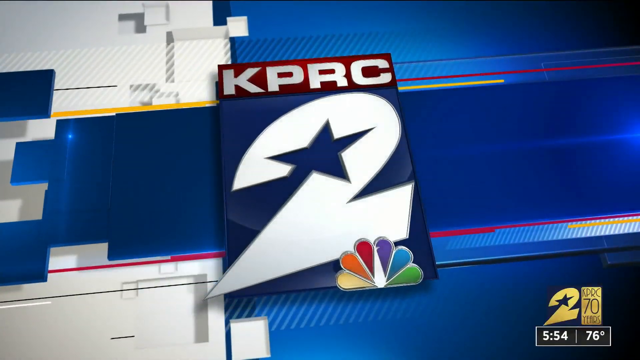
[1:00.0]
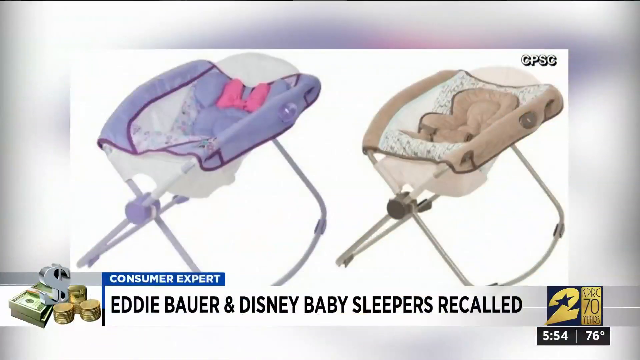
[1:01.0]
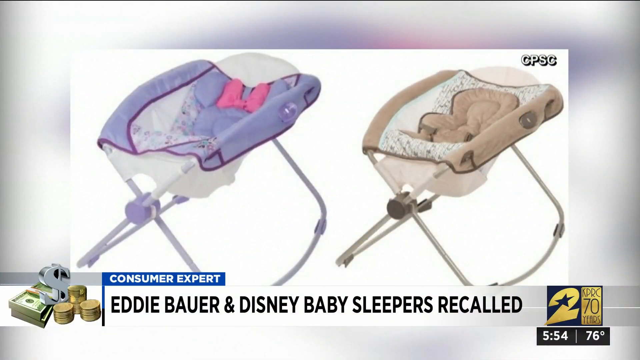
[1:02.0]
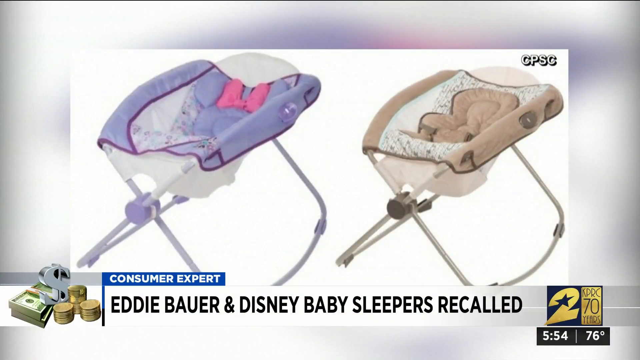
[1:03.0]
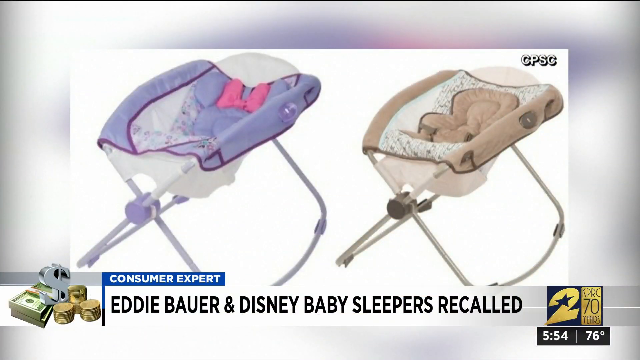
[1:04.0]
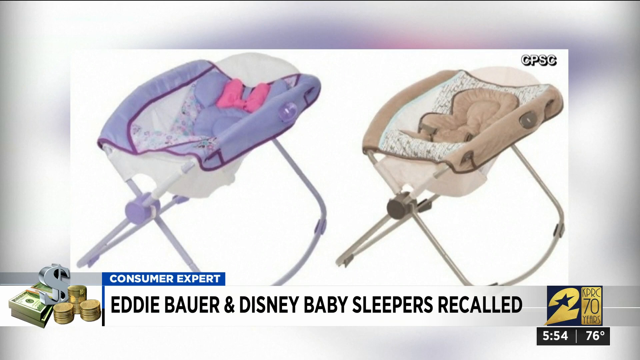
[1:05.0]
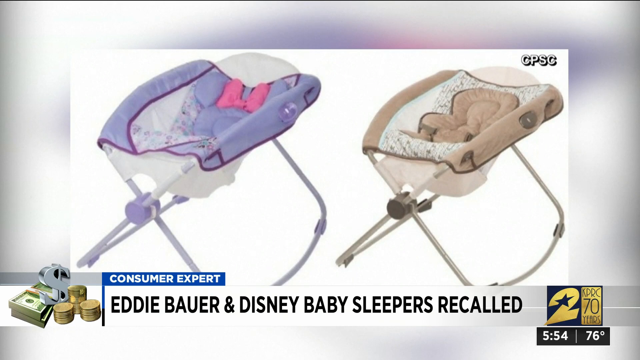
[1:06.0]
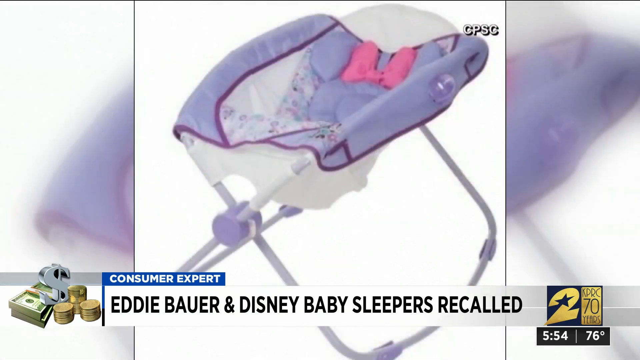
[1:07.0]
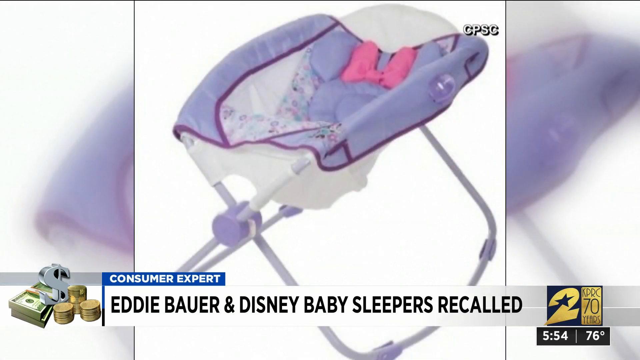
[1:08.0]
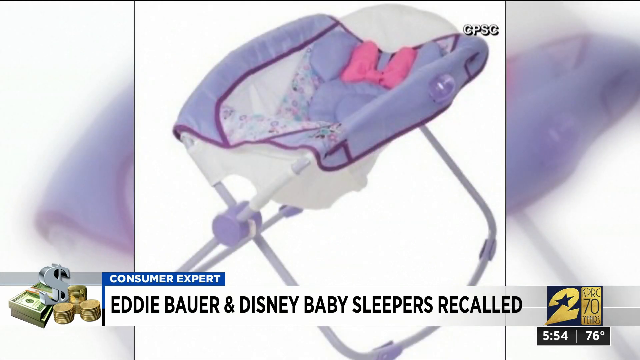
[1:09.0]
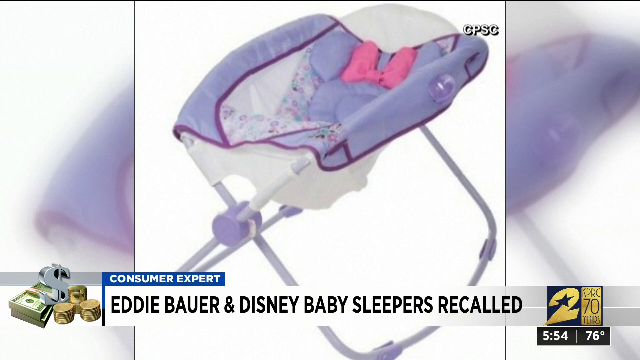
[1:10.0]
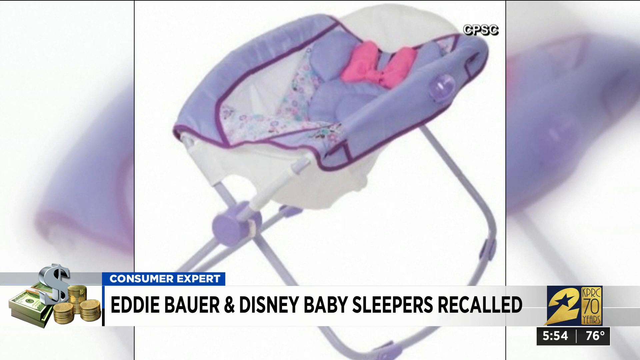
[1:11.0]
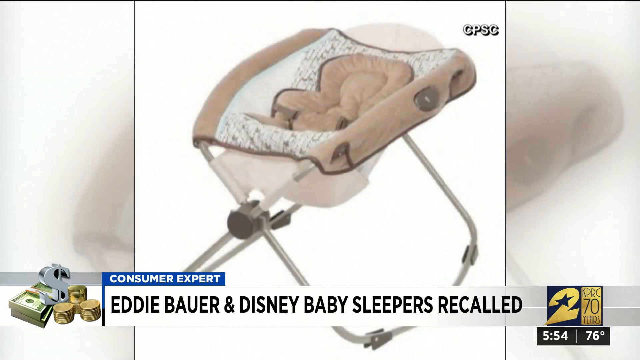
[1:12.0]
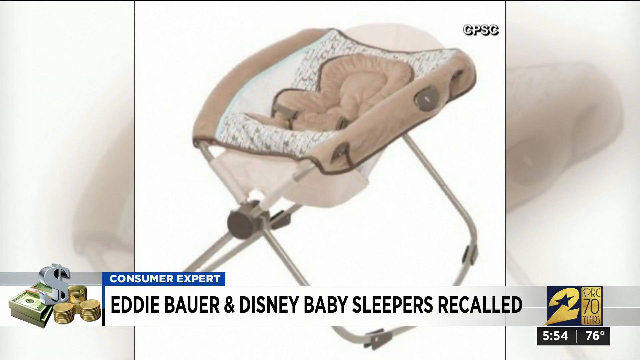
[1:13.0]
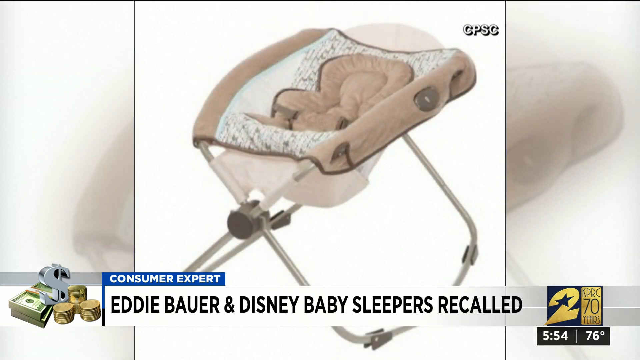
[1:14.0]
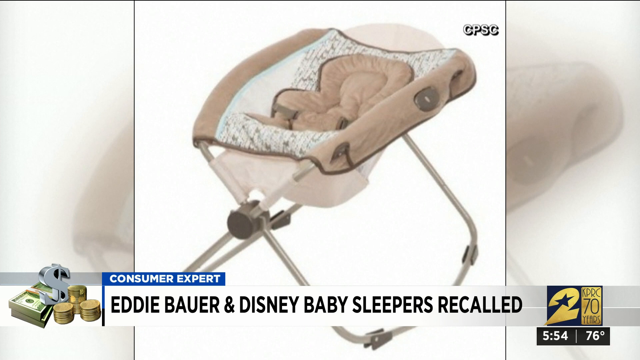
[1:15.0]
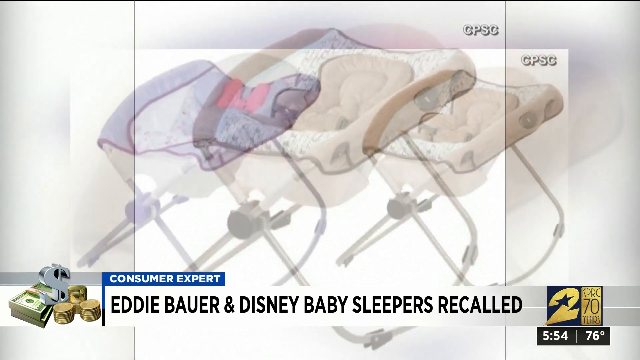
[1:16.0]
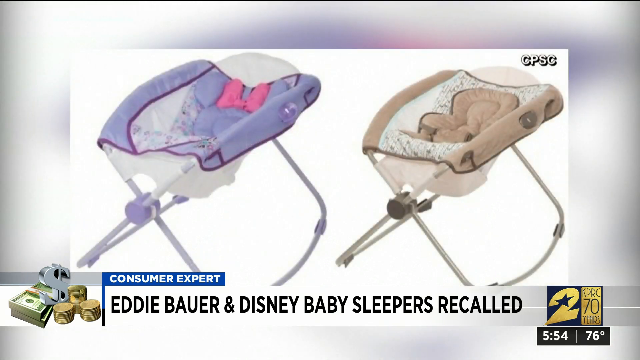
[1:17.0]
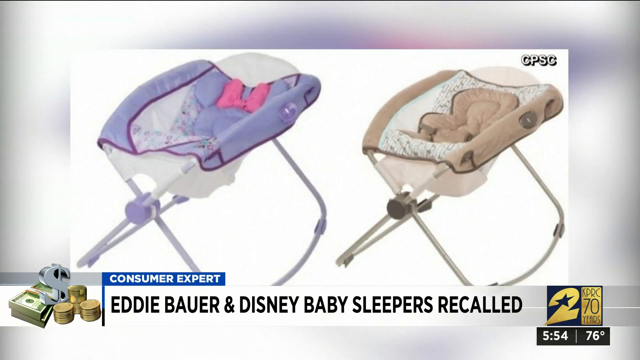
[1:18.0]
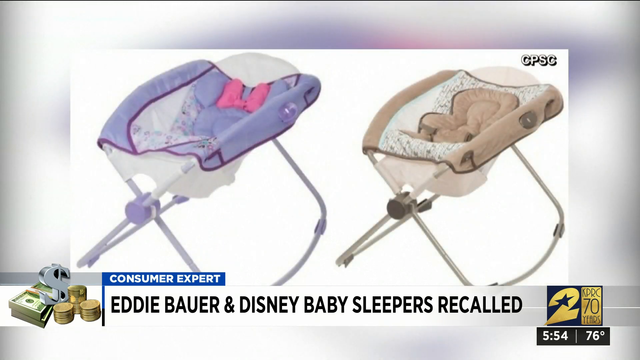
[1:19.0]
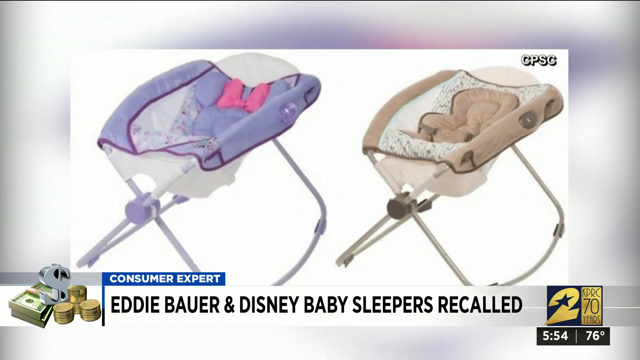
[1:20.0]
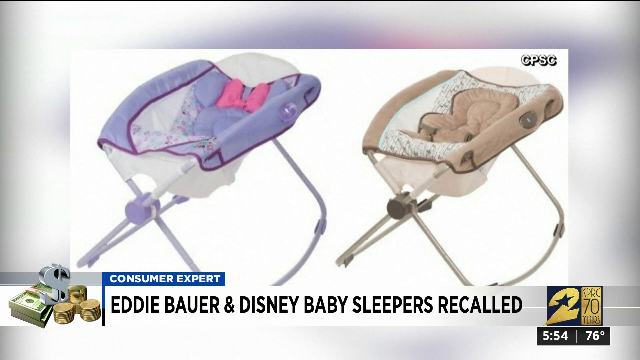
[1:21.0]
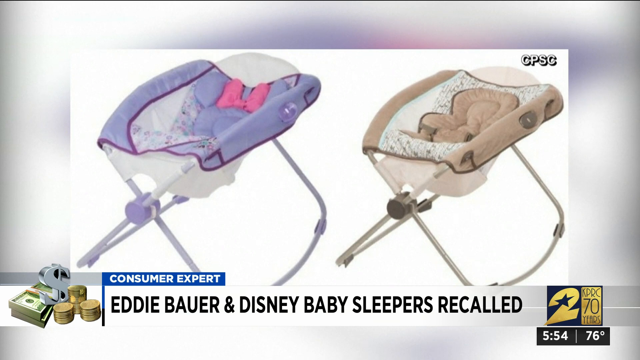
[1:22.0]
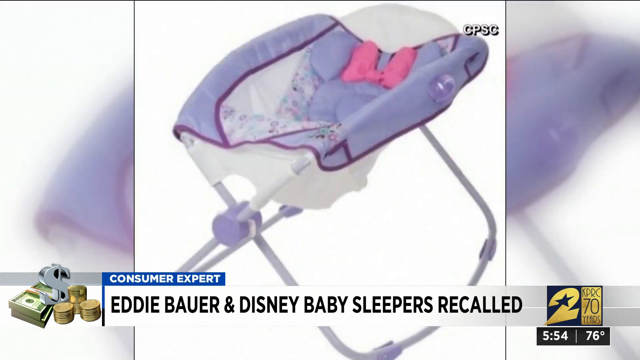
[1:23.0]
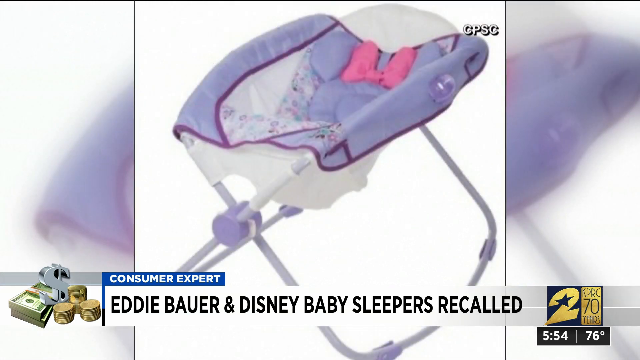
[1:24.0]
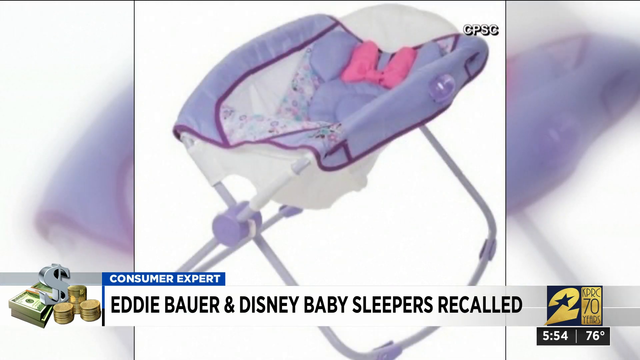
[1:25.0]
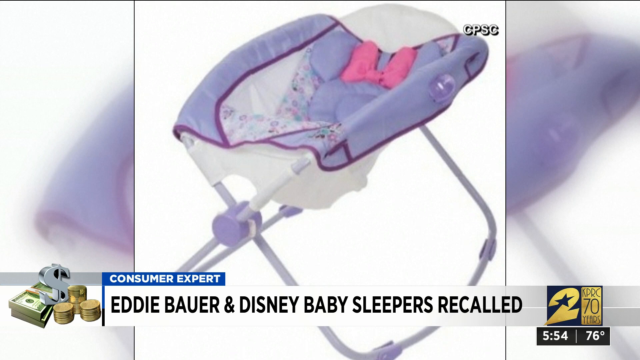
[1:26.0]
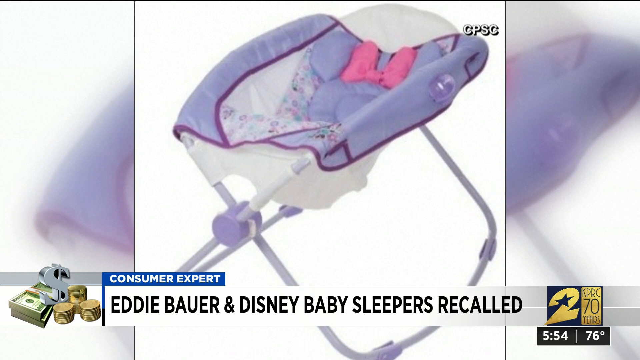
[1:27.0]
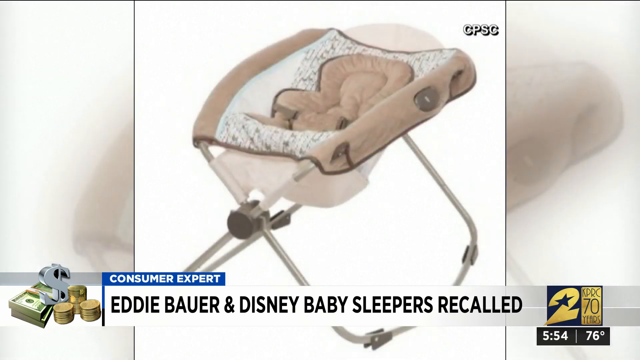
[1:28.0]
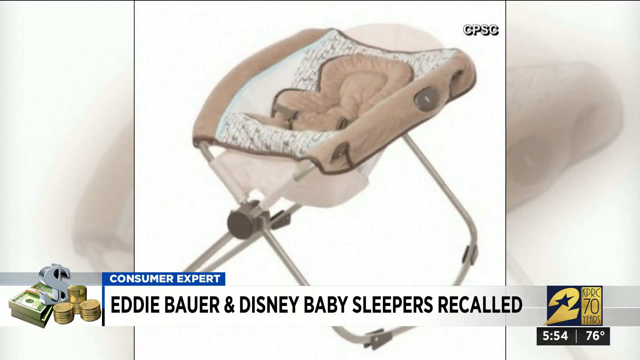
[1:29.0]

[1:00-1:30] A screen with a blue and gray split background shows, in the middle, a logo for the KPRC2 news station: a large number 2 with a star cut out in the middle, and the NBC peacock logo. The screen changes to an image of two baby sleepers on a white background, a purple one on the left and a brown one on the right. A white rectangular box at the bottom of the screen reads "Eddie Bauer and Disney baby sleepers recalled". A close-up of the purple sleeper follows, with a pillow inside that looks like Minnie Mouse, with a light purple head and a pink bow. Then a close-up of the brown sleeper, which kind of looks like it has a fuzzy brown small body pillow on the bottom where the baby would lay. Another zoomed-out image shows both sleepers next to each other, followed by another close-up of the purple sleeper and then the brown sleeper.